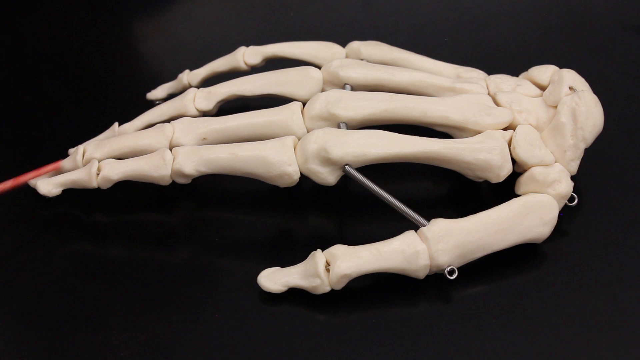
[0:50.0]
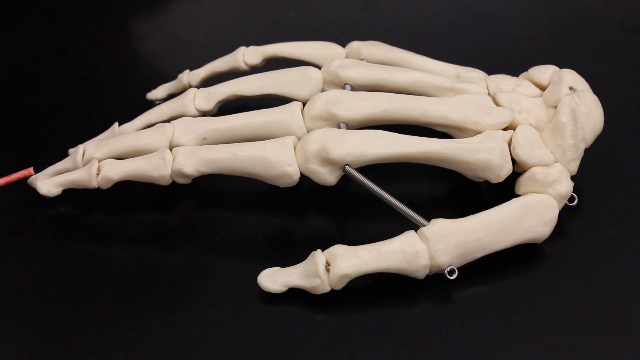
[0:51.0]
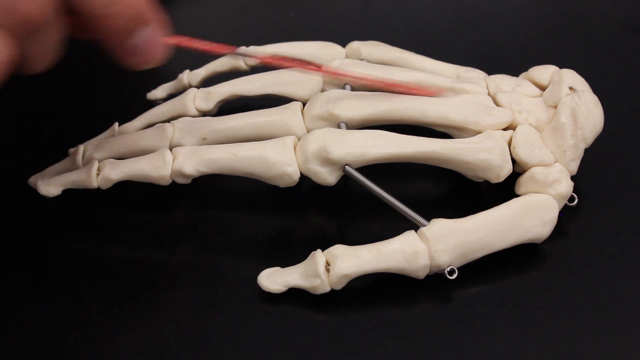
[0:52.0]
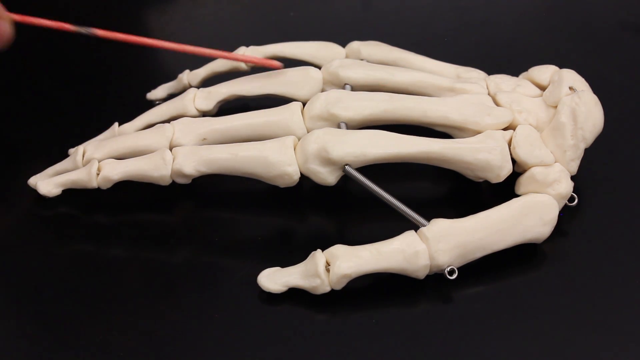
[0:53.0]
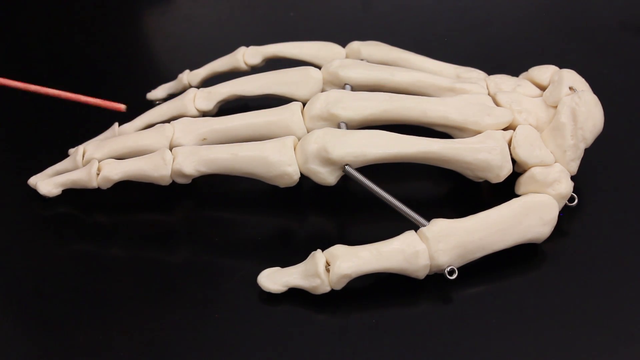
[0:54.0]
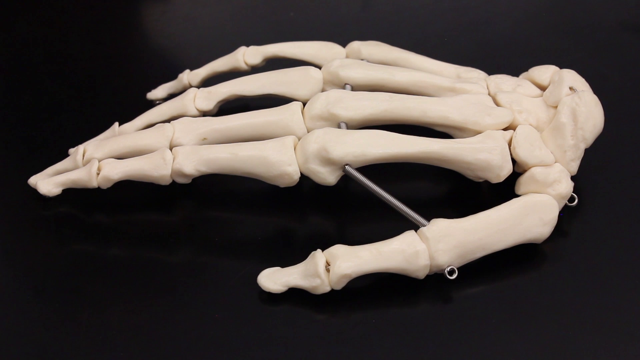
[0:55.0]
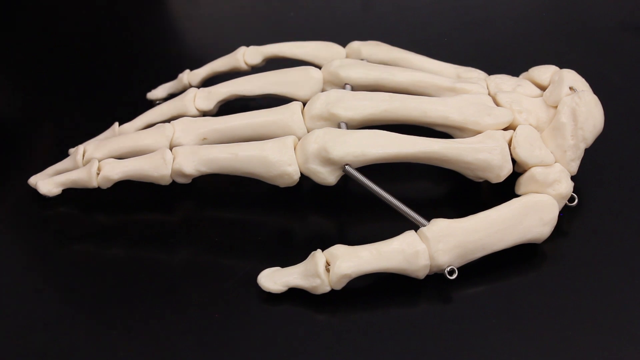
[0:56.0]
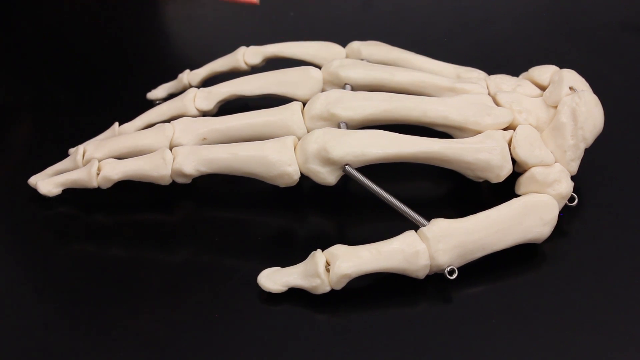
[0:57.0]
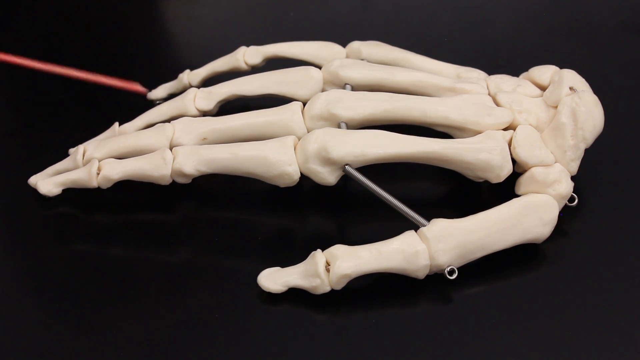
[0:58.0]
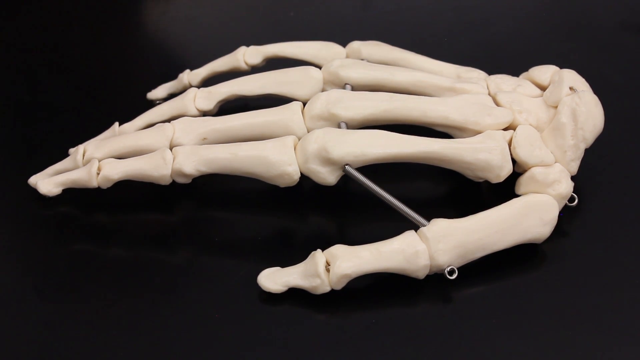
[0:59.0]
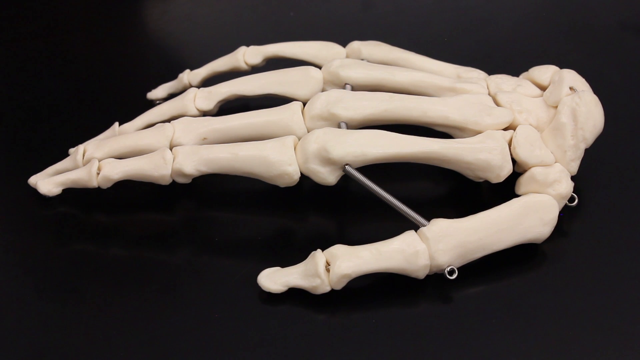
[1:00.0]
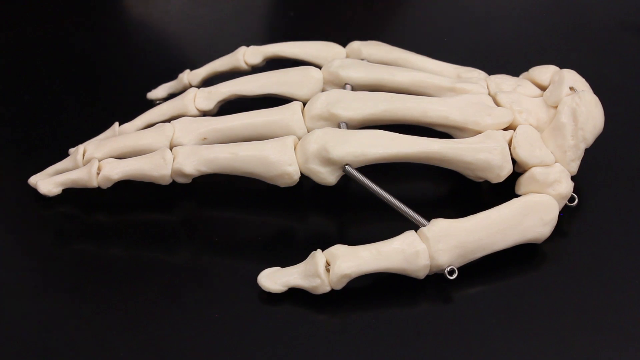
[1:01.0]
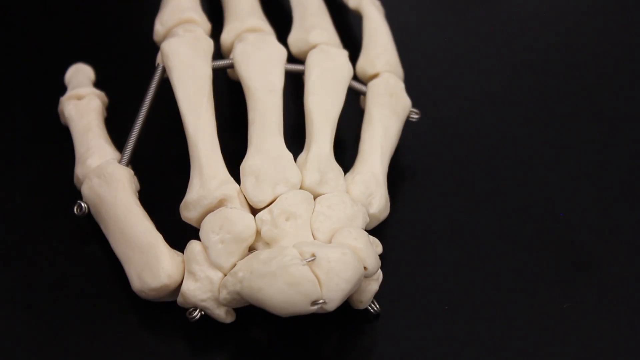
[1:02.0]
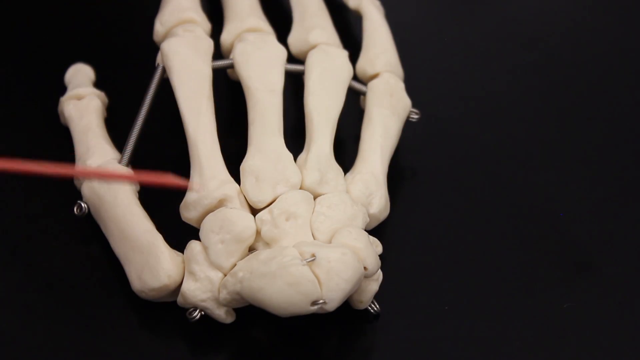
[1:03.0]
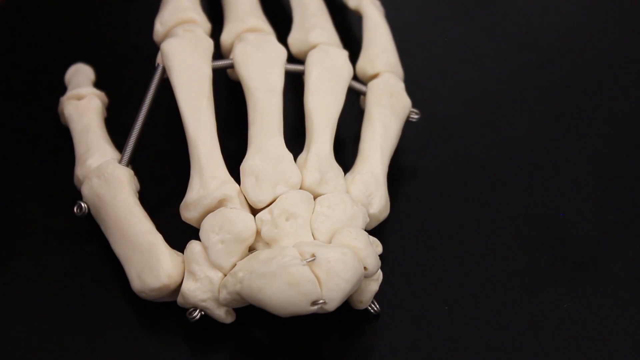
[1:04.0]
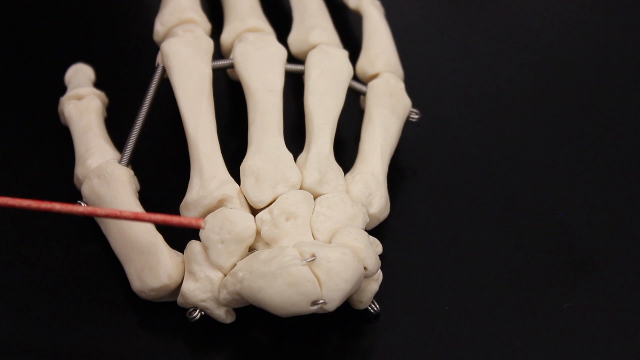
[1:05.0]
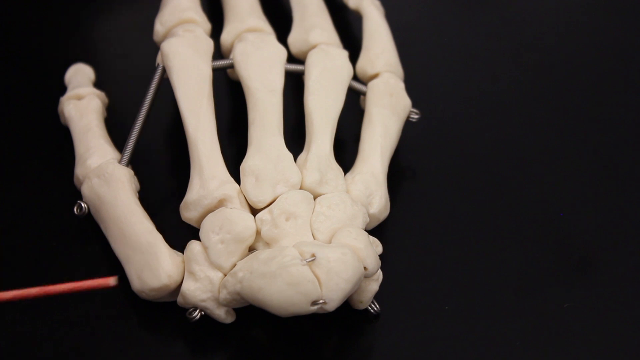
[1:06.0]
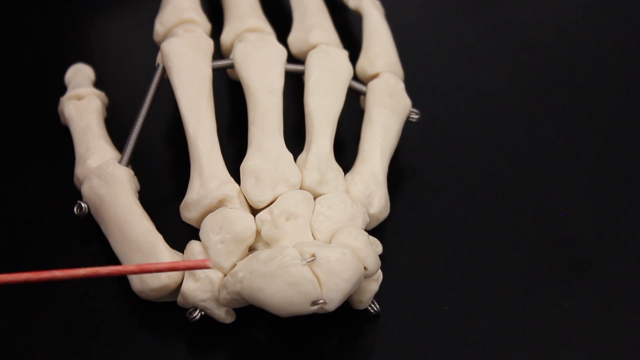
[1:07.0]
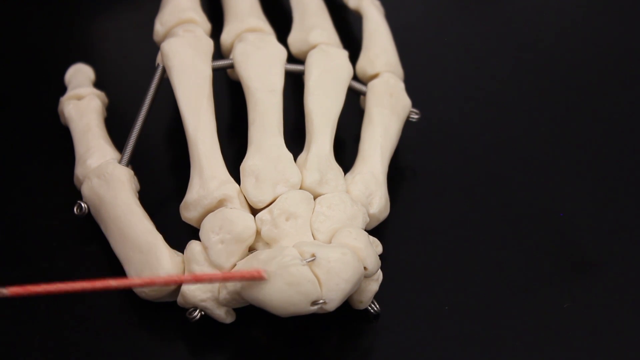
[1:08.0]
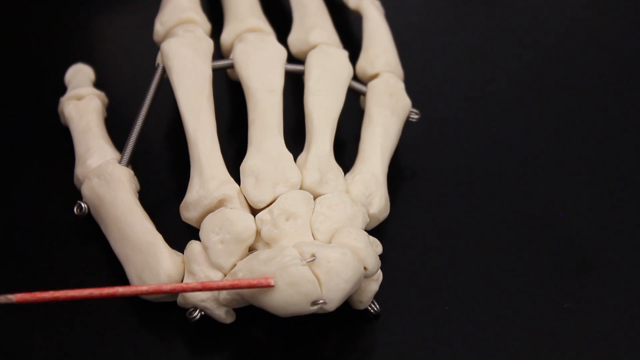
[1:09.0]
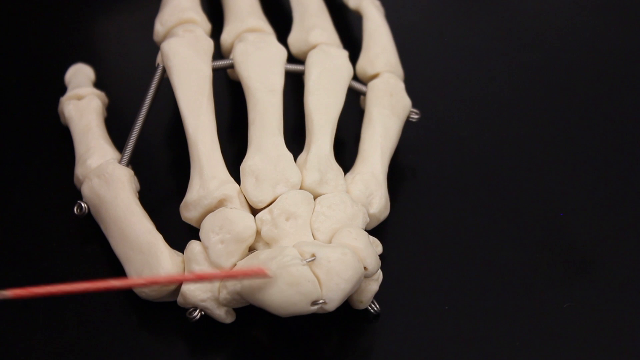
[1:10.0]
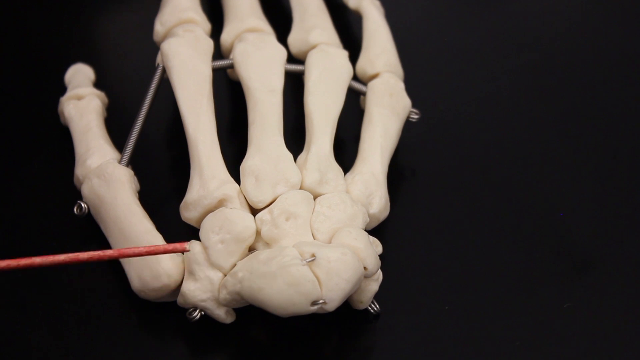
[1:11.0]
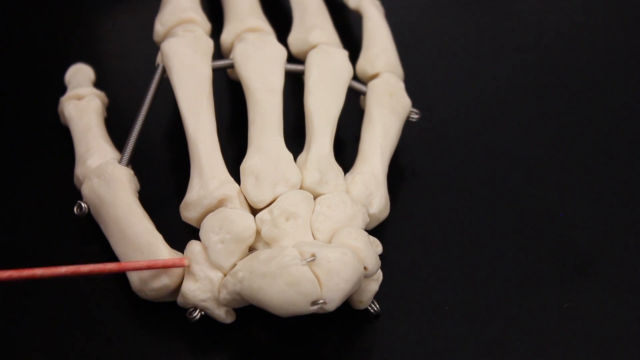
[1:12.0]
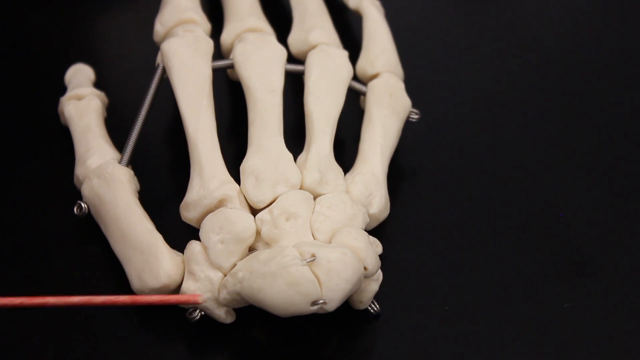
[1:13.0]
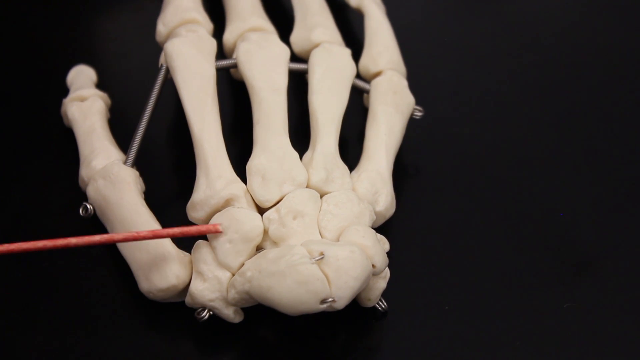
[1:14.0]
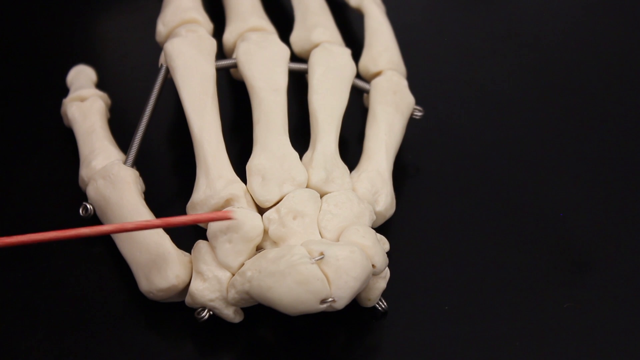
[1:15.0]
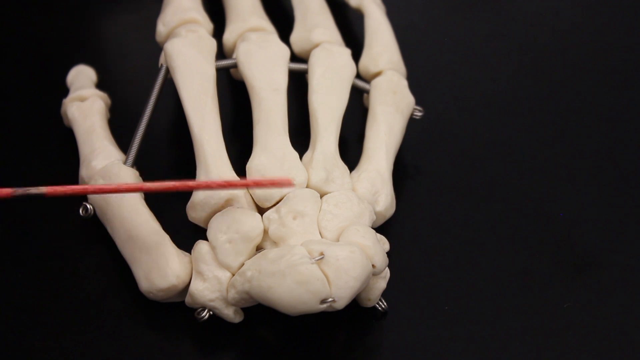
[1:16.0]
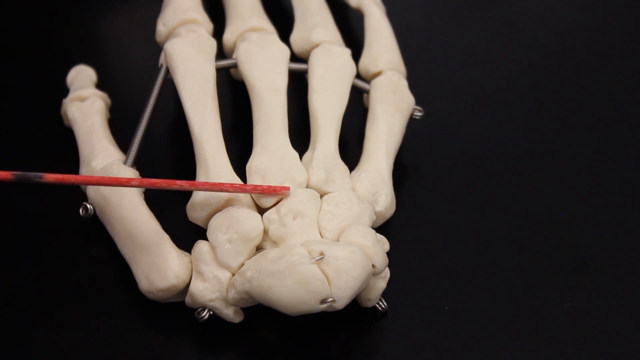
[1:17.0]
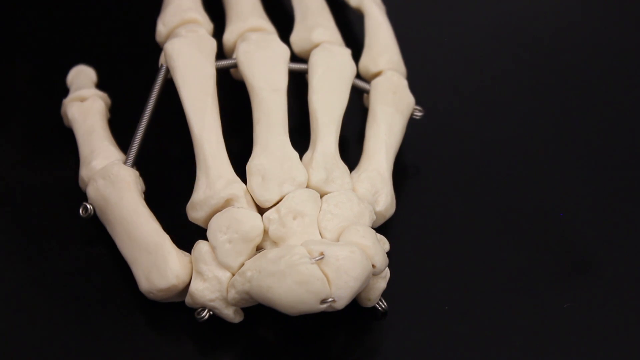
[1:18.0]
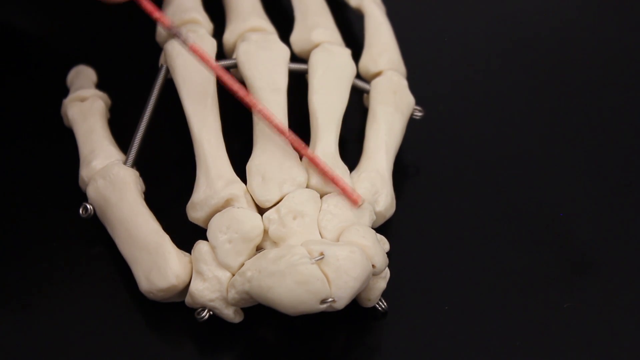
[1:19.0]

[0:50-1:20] A human skeletal hand model, specifically of the right hand, is on a black surface, its bones held together with silver metal rods. A pink wooden stick comes in from the left center edge of the screen and is used to point toward various bones. It first touches the tip of the middle finger bone, then a hand reaches in from the center left and moves the stick along the middle finger bone from the hand all the way down. The stick then moves upward and does the same for the ring finger bones, then touches the pinky bones in the same manner, and the thumb and index finger gripping the stick briefly appear from the top left corner. The stick taps multiple bones of the pinky finger and then pulls off screen. The camera angle changes from a side view with the right thumb facing the camera to a back view with the wrist facing the camera. The stick comes in from the left side of the screen and starts touching various bones that make up the hand, making circular motions up and down along the bones. It then points toward the bones connecting the thumb to the hand and starts caressing the wrist bones.